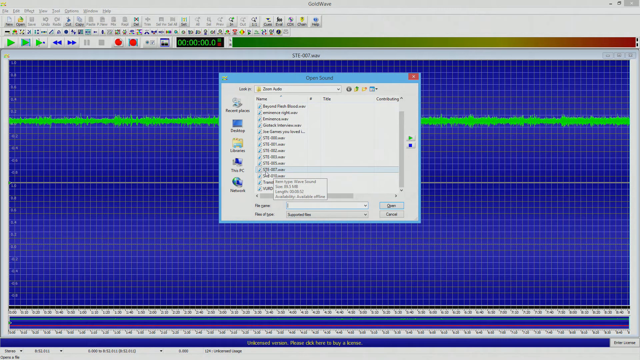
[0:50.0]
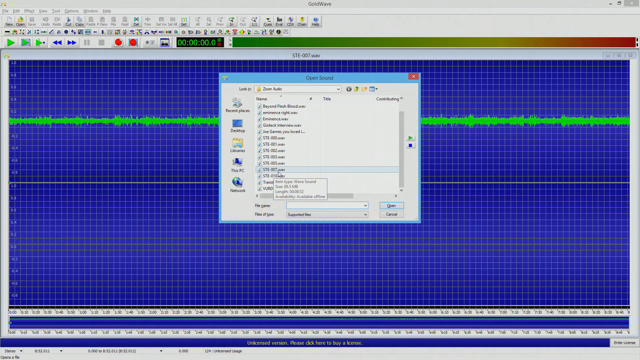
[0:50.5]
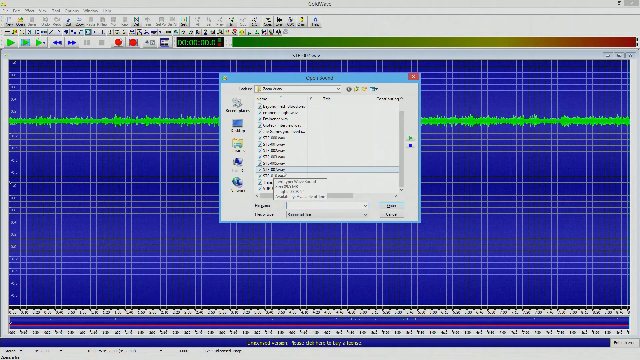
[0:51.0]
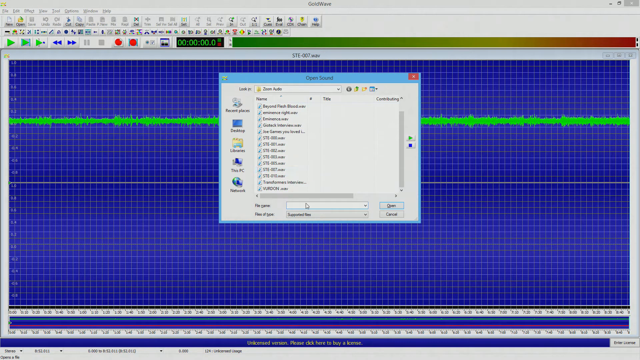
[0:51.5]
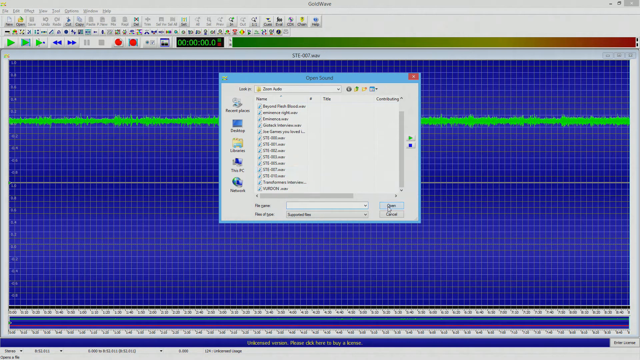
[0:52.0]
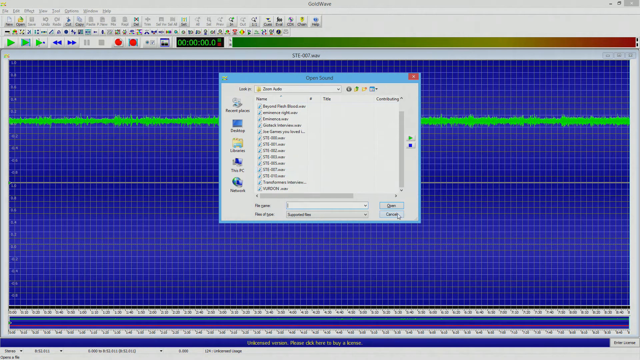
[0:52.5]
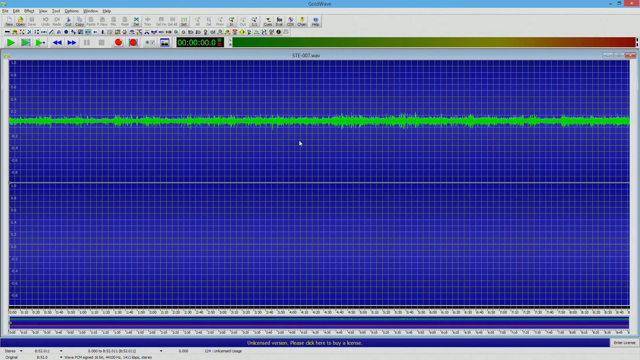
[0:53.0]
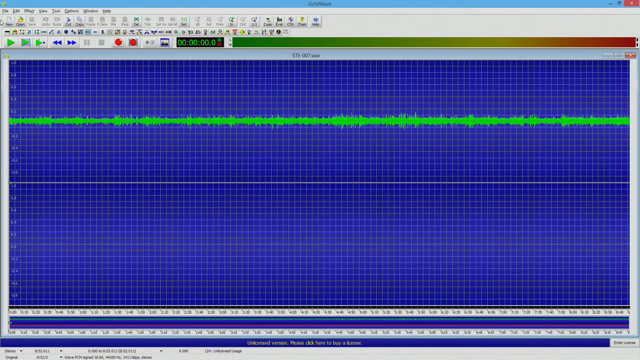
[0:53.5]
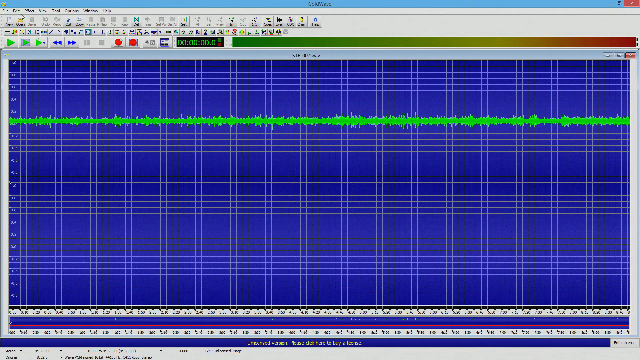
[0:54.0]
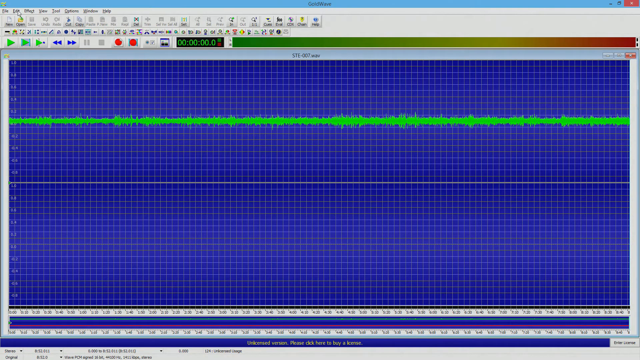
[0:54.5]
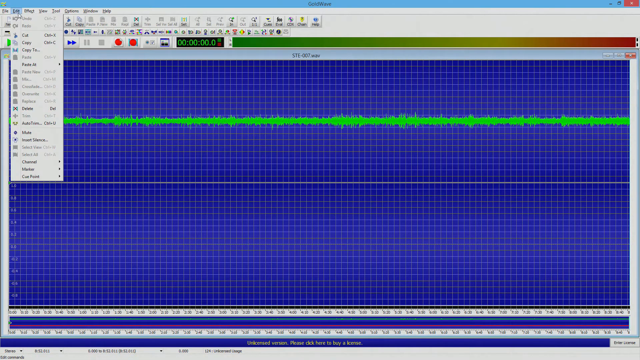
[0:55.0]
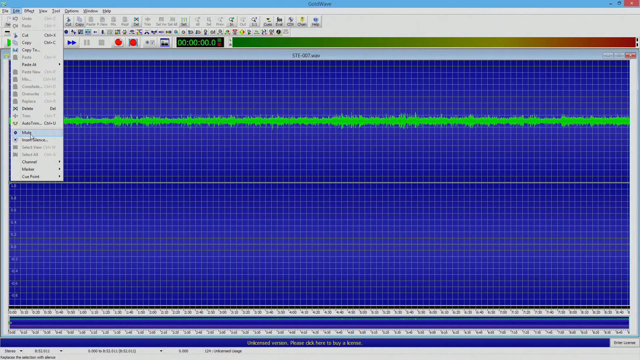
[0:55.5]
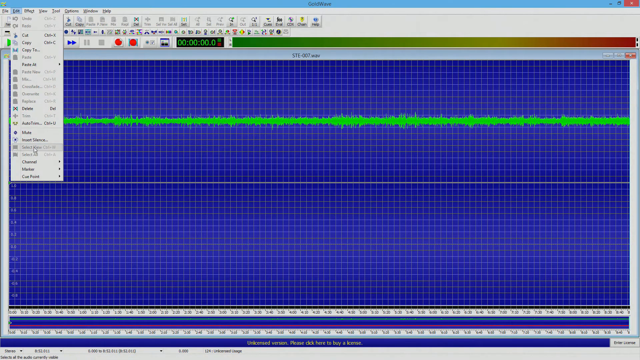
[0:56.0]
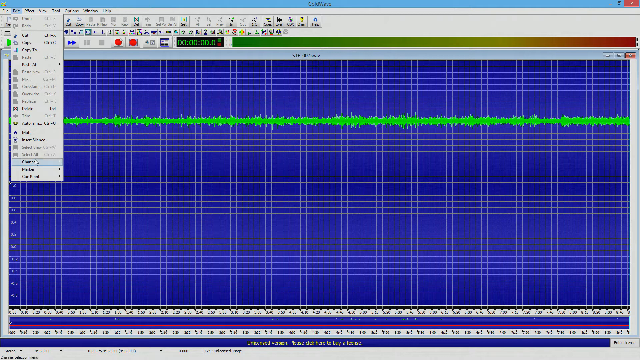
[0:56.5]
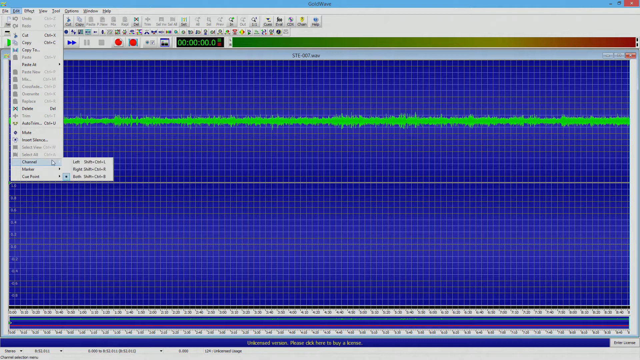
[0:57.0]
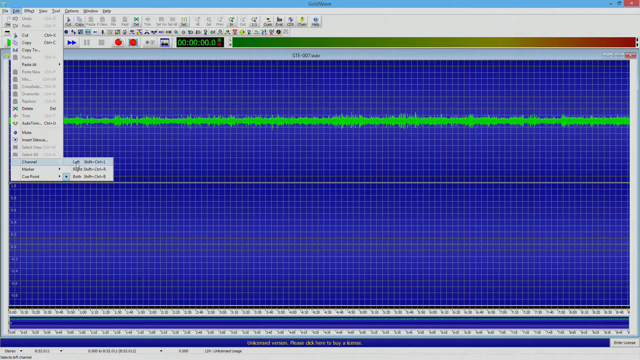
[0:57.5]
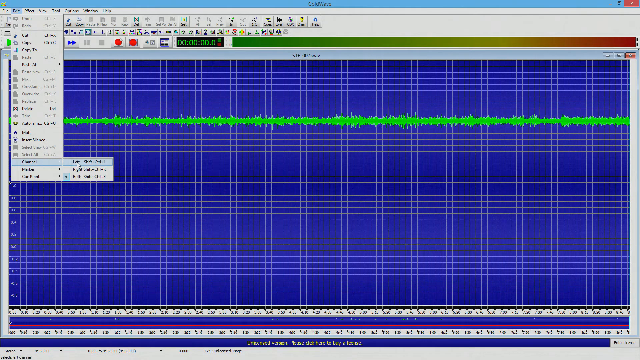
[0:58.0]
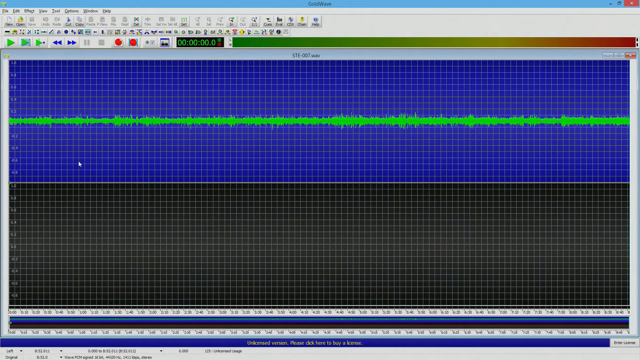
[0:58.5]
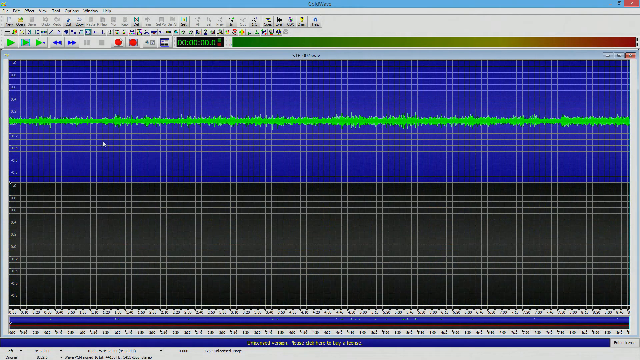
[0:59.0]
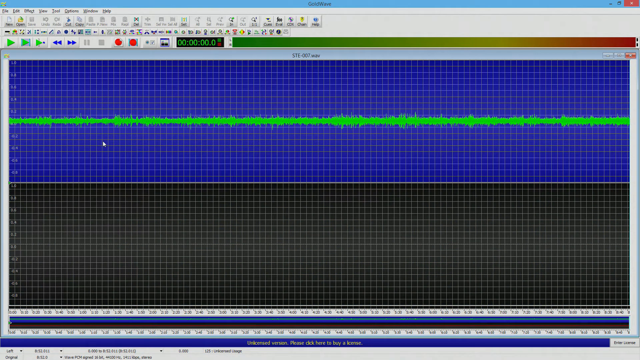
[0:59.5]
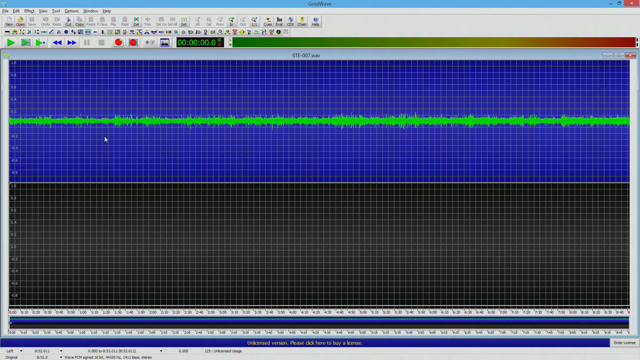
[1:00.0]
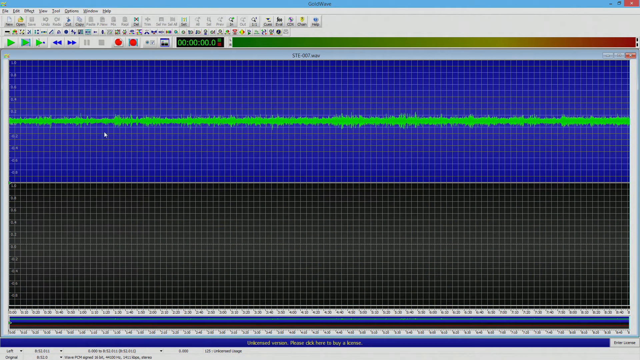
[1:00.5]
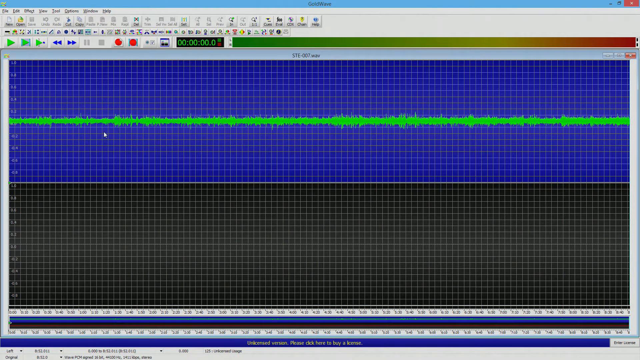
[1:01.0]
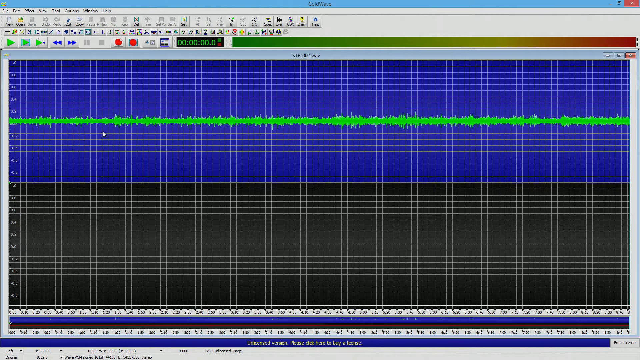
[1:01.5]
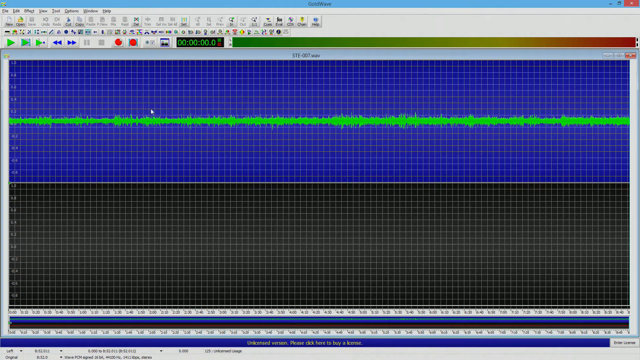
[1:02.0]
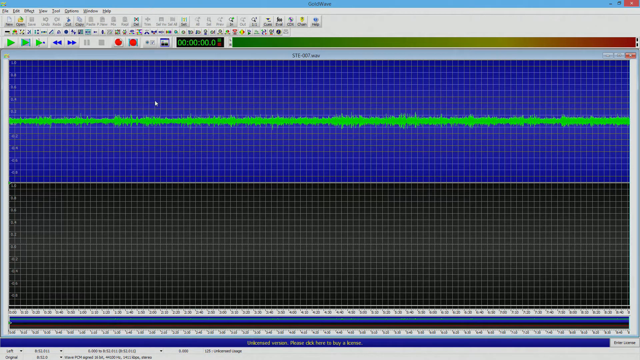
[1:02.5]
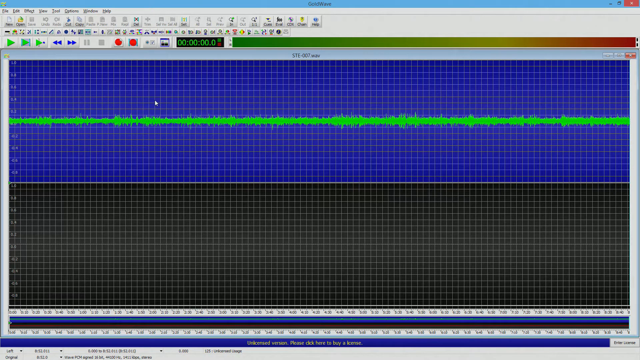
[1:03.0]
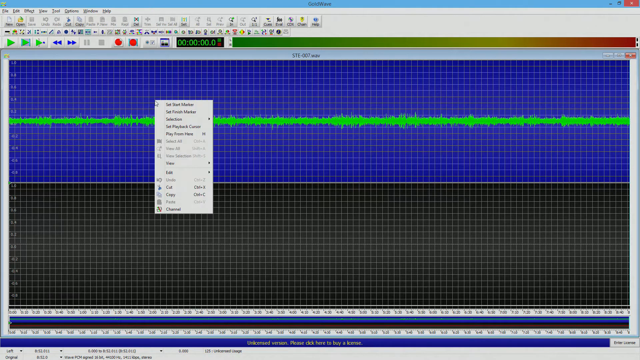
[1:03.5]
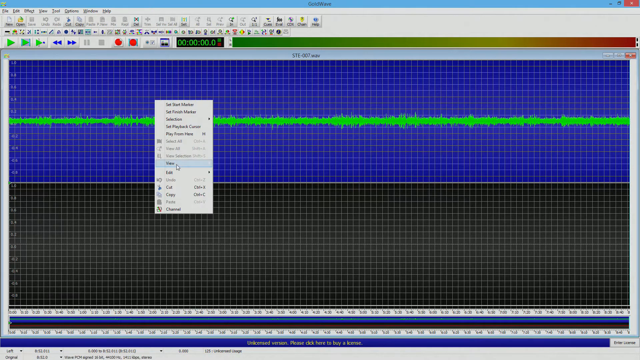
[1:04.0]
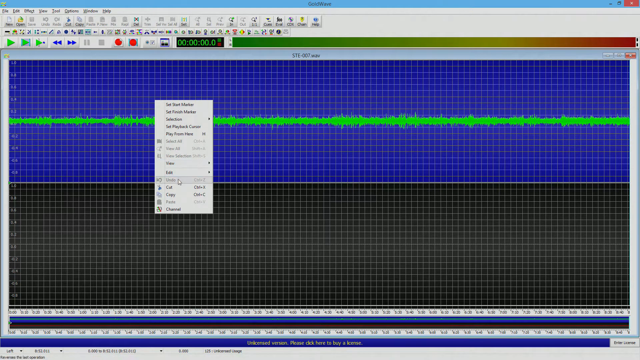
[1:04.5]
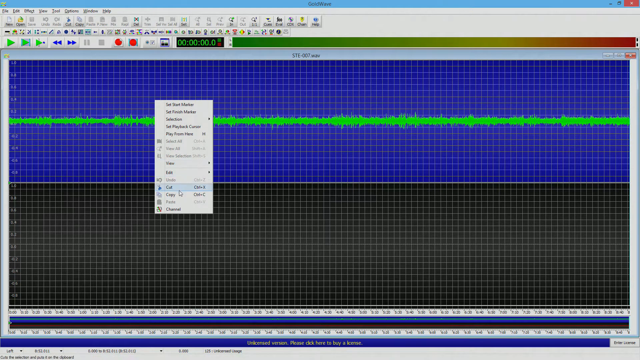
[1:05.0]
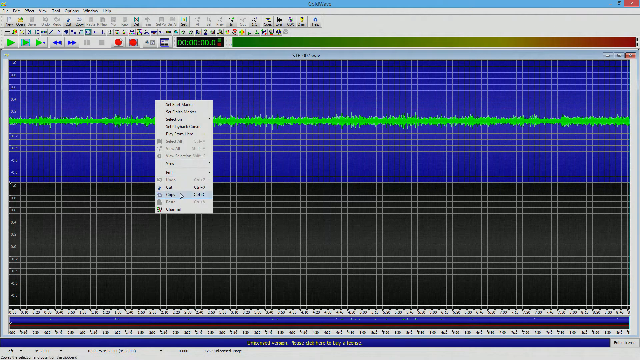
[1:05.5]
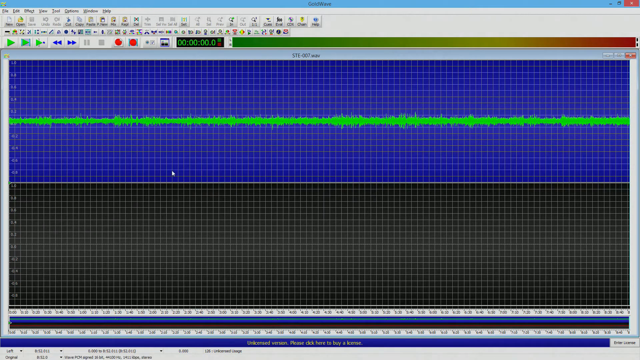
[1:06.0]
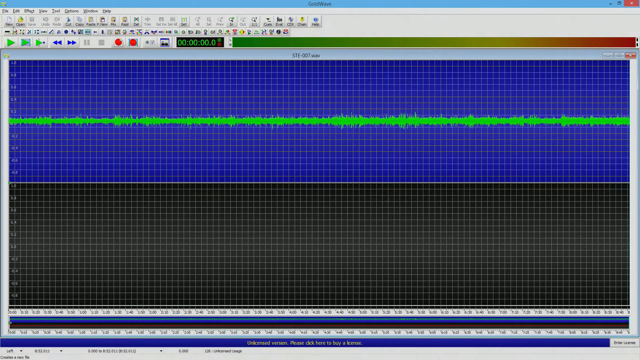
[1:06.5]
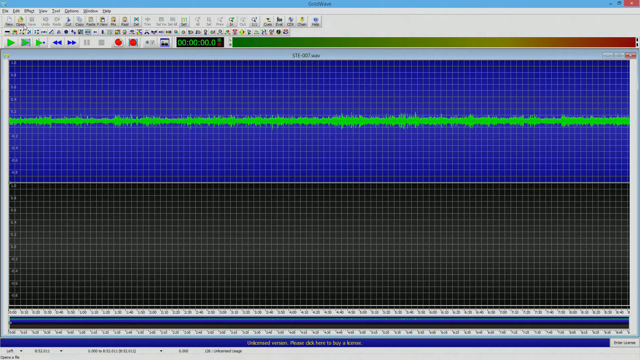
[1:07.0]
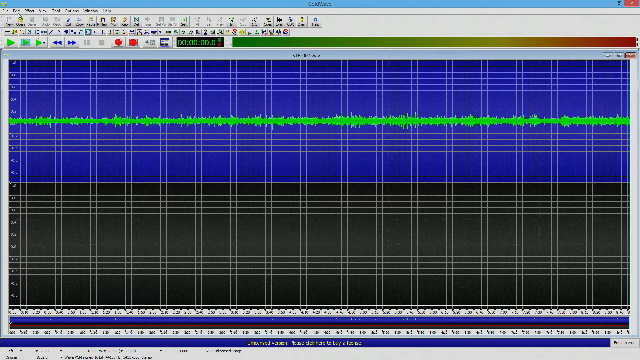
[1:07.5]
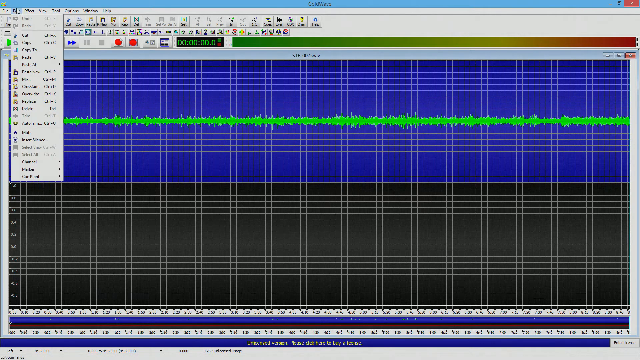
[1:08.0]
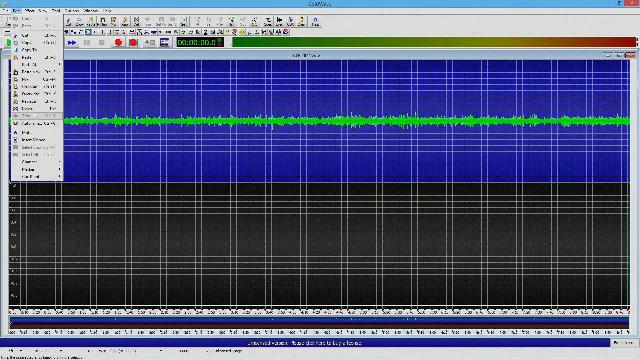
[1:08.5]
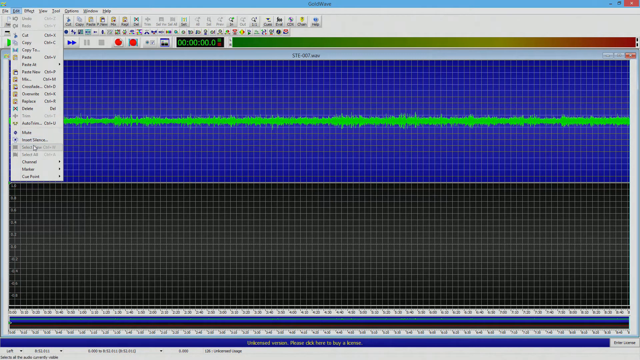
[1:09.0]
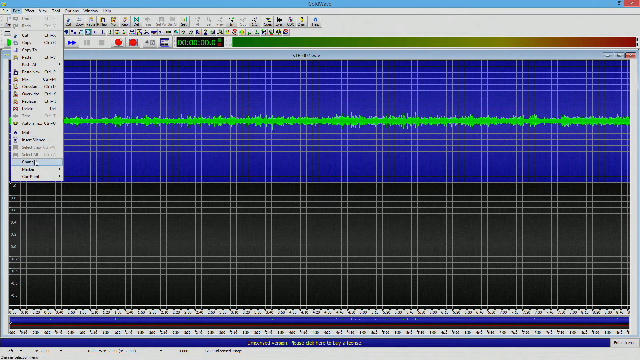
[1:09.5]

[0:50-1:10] On a graph-like screen with little boxes, a cursor moves around and pop-ups appear. The first pop-up is in the middle and something is clicked. The second is in the upper right-hand corner, and it turns the bottom of the graph from purple to a dark gray. A smaller pop-up then appears to the right of that. Next a larger pop-up appears in the center of the page; the cursor clicks on it and it goes away. The green line running horizontally across the graph is jagged on both sides, up and down. A solid gray line runs from left to right, with a very faint gray line underneath it. Numbers run vertically down the left side. A pop-up stays on the screen longer than the others. At the bottom of the page are two horizontal white bars running from left to right, with numbers inside them along the length of the screen.